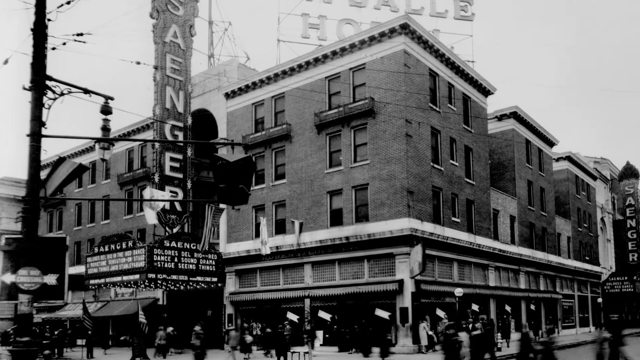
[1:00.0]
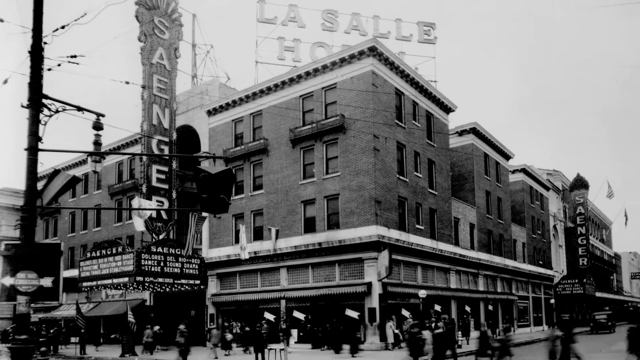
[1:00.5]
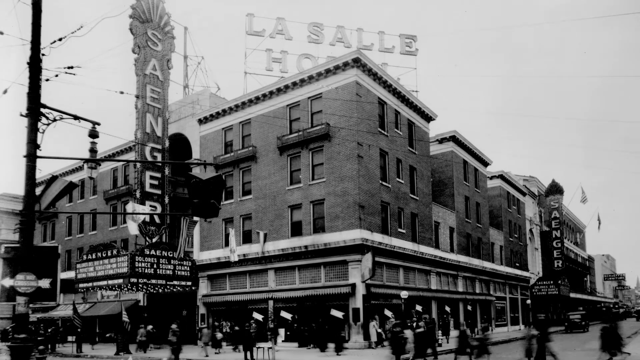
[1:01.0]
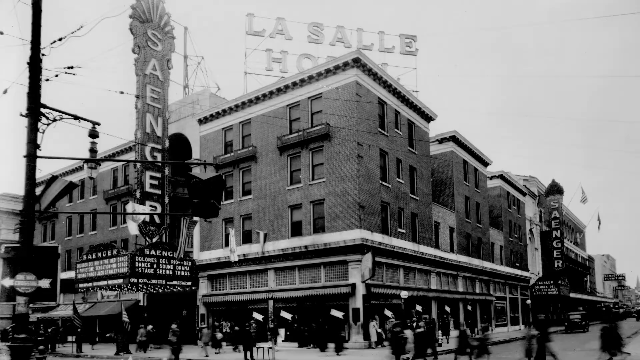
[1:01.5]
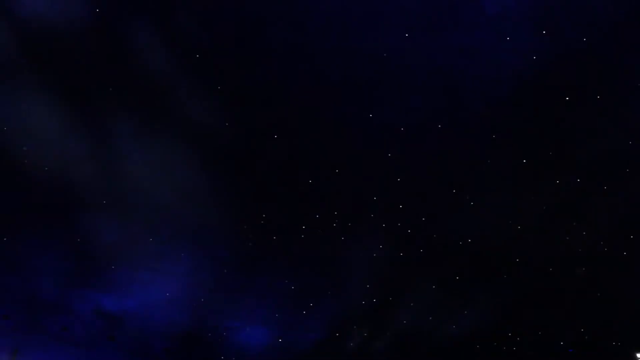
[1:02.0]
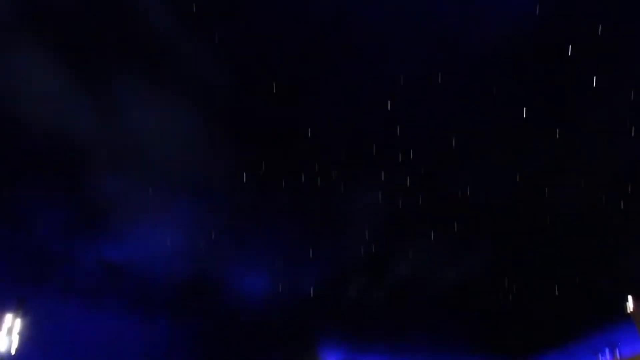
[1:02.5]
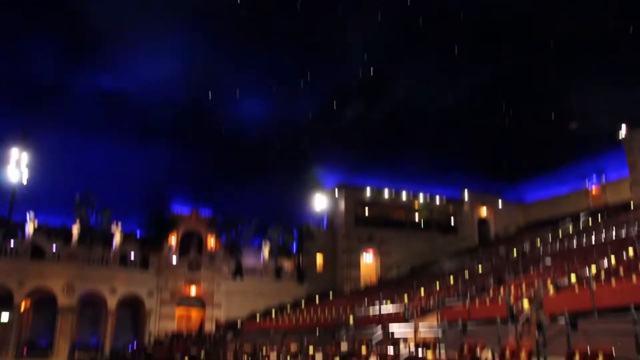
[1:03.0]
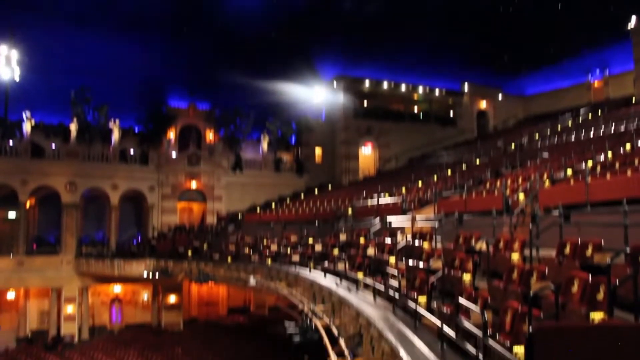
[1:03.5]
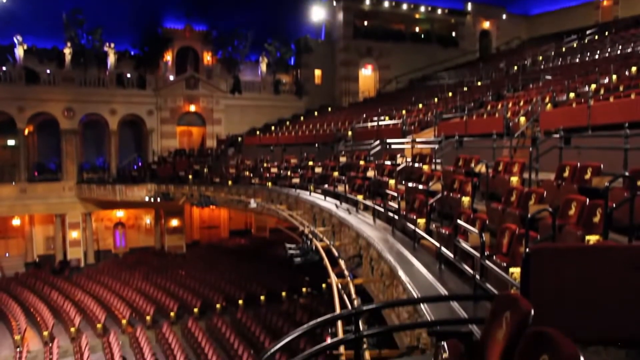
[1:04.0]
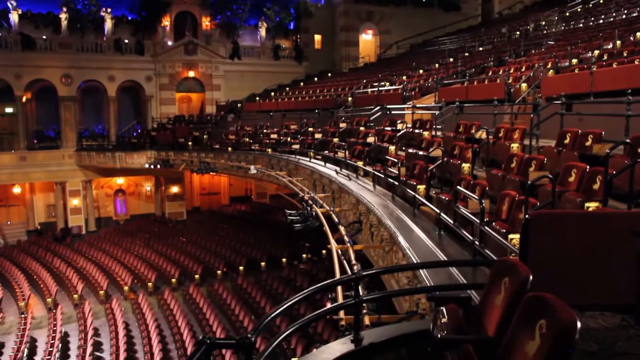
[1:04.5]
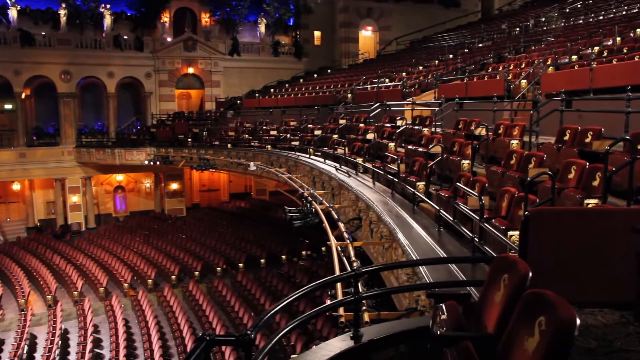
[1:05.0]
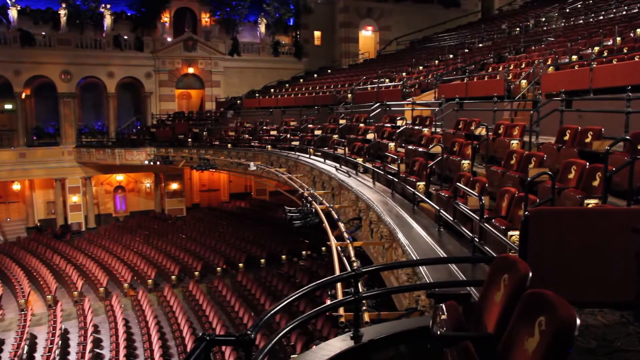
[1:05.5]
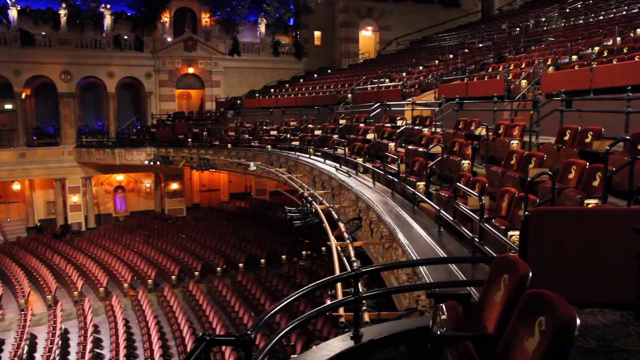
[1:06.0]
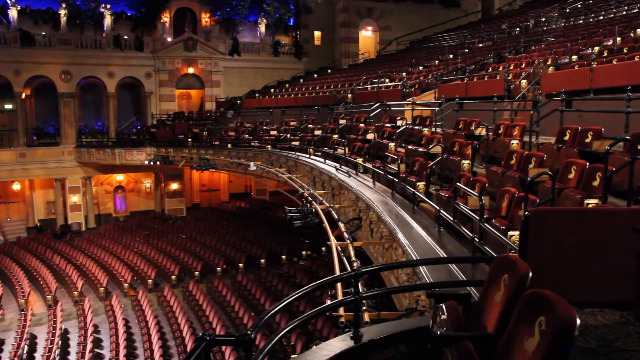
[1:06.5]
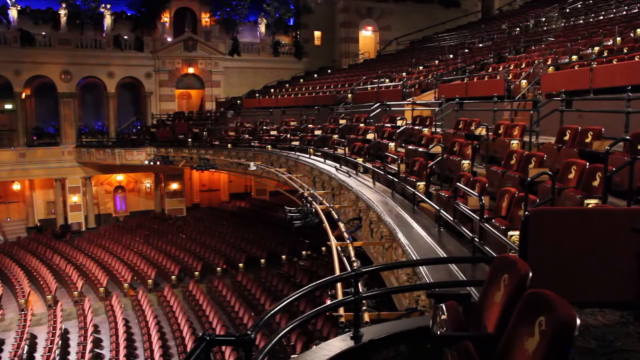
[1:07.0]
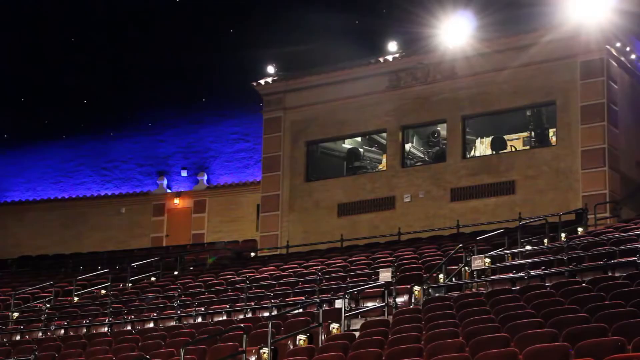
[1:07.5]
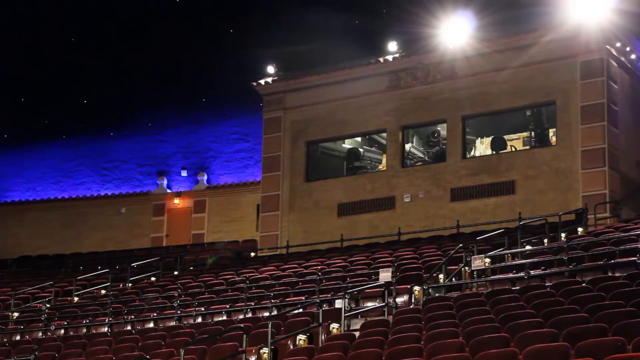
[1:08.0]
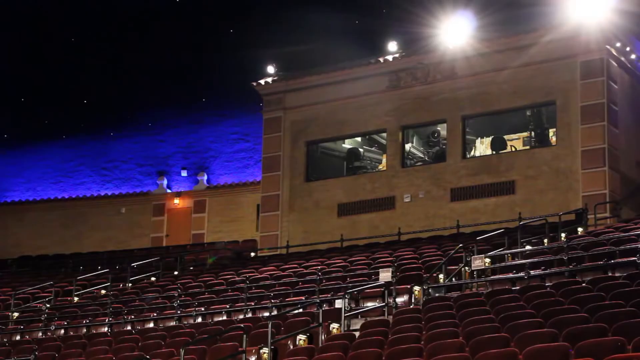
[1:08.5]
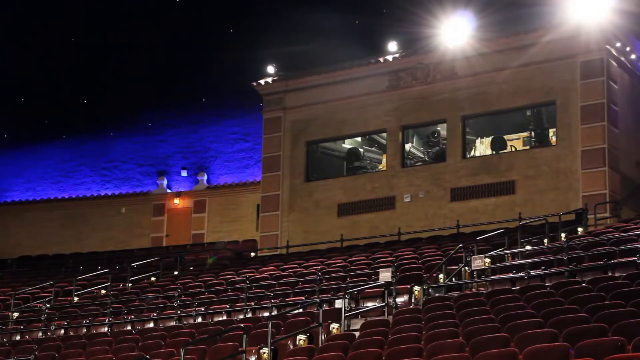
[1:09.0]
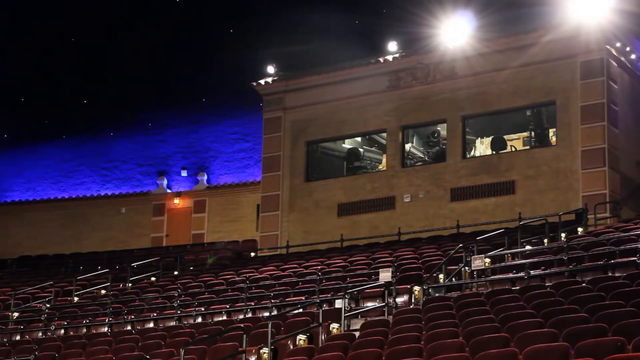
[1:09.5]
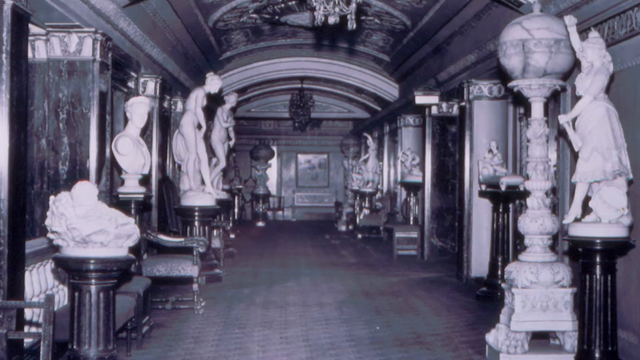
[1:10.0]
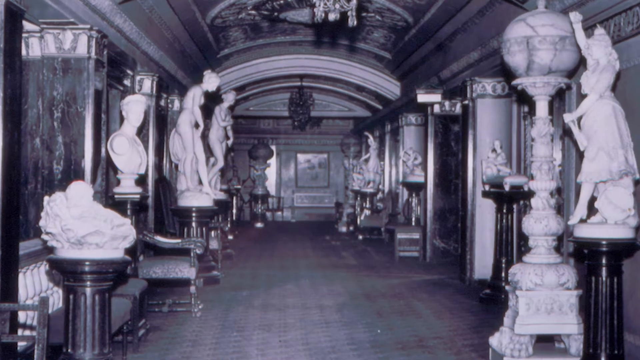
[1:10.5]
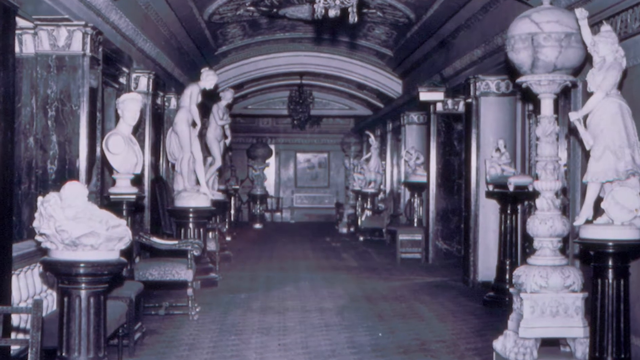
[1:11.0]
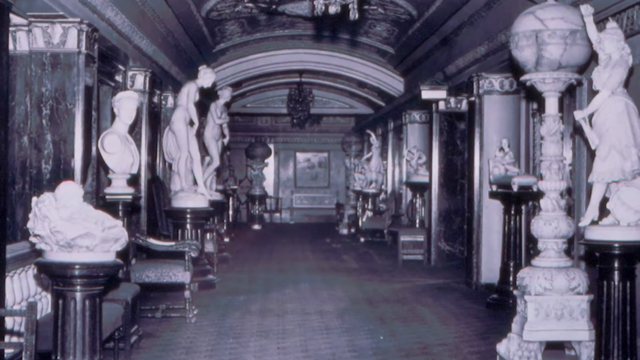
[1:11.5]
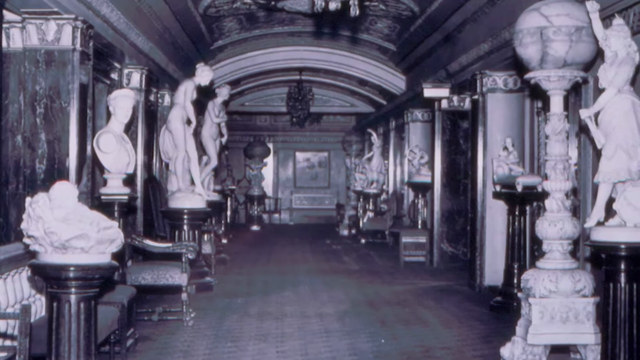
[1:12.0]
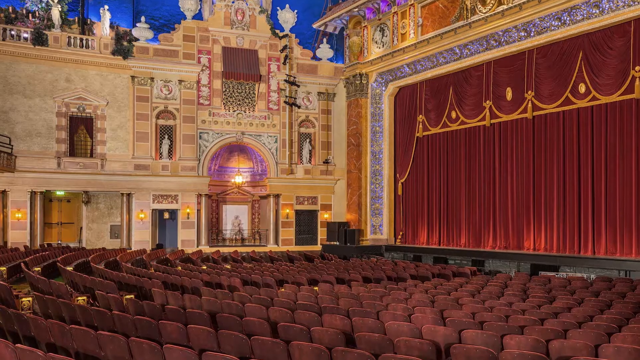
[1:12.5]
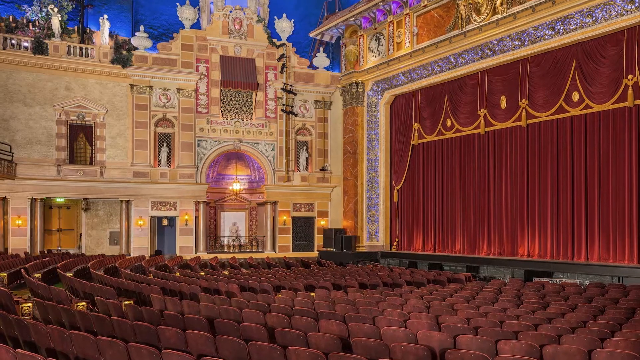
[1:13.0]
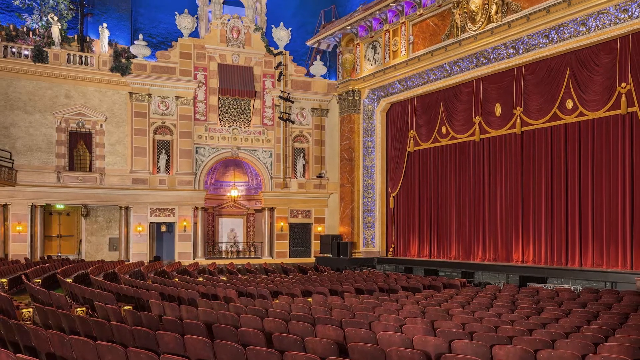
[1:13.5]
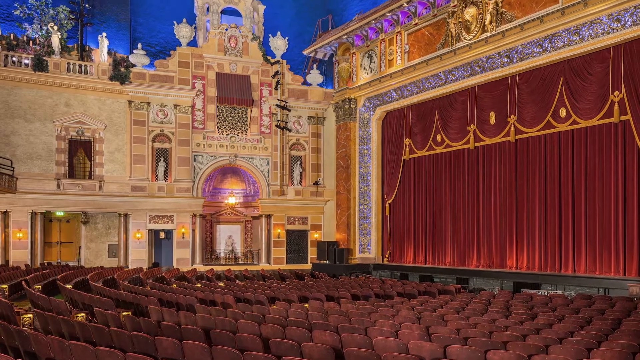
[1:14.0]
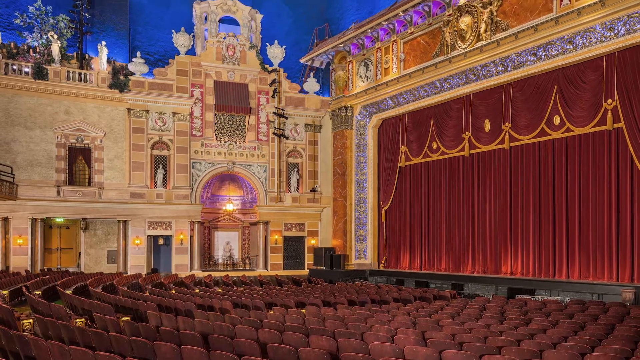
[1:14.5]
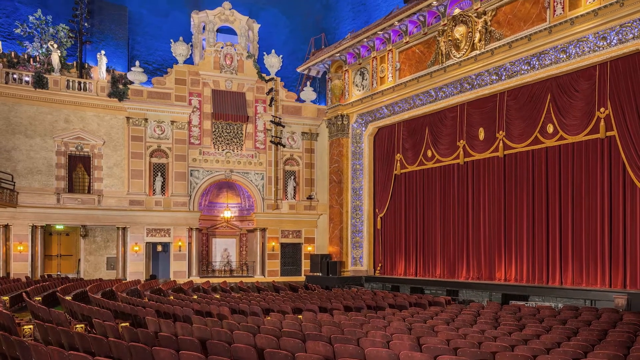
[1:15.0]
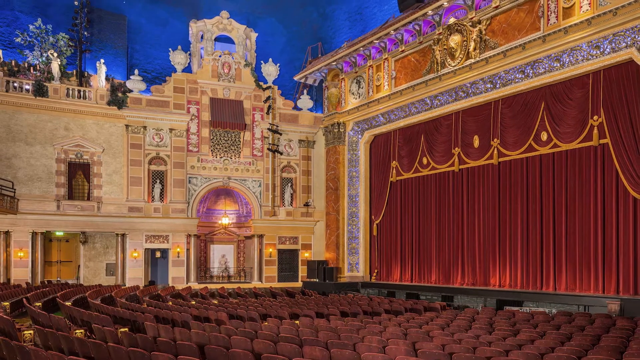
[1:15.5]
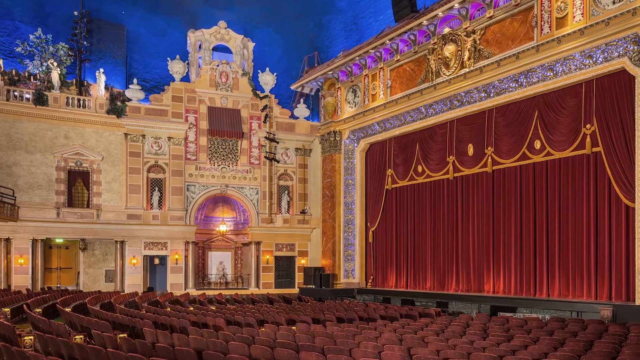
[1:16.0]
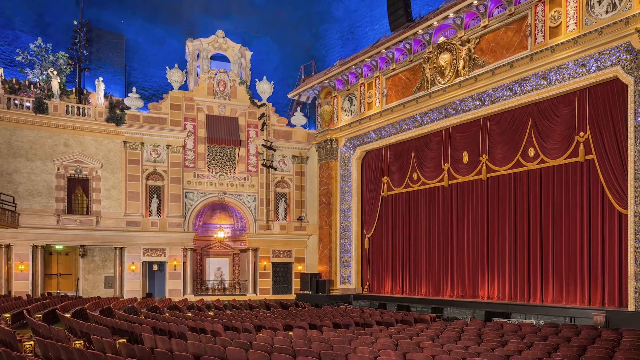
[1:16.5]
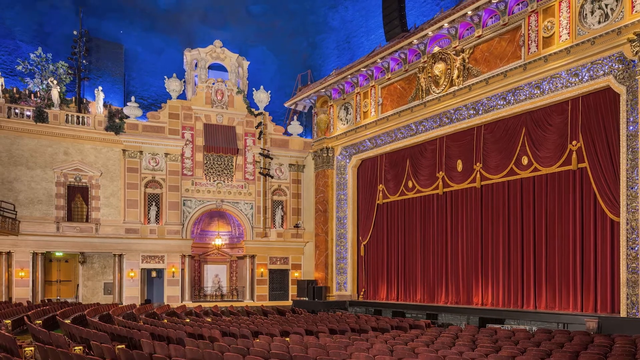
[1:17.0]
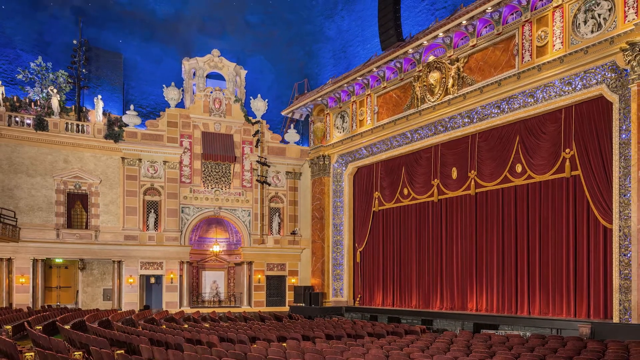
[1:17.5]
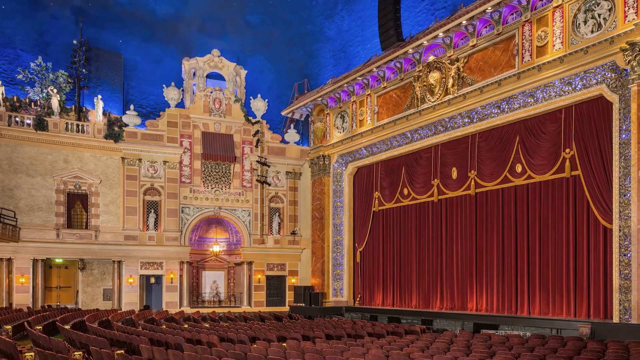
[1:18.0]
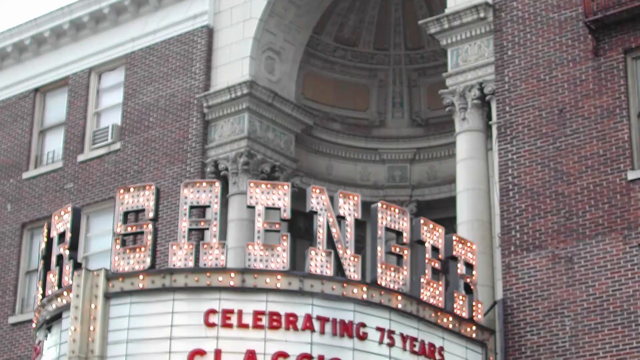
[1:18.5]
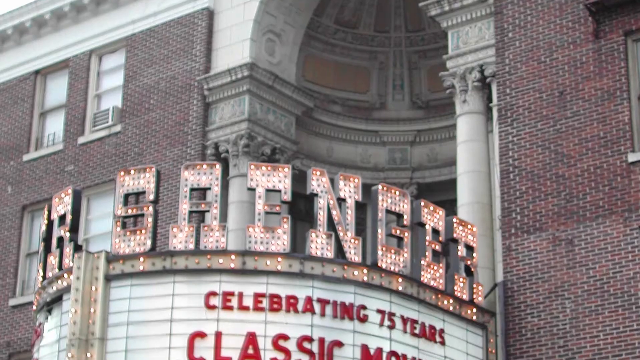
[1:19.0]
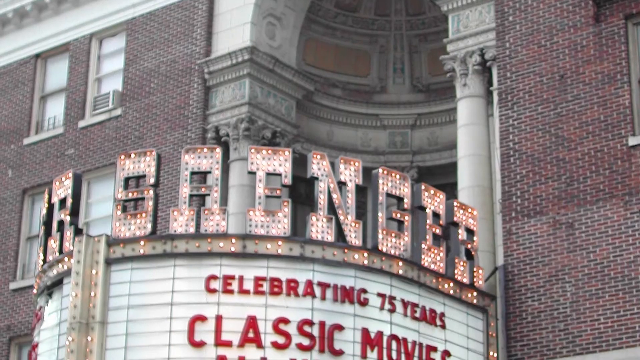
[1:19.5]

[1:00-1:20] The Saenger building has quite a vintage look and appears to be at a hotel, since there is a sign above the building that does not fully show. On the left is what looks like a robot, along with a sign that says "Saenger." Back inside the Saenger Theatre, a clearer view shows red chairs. The top view has blue lights and a dark sky, giving a magical feel, and there is quite a lot of space inside the theatre. A different view of the seats follows, then sculptures of people inside the theatre, mostly women and one man. The women pose differently, and two of them look like they are not dressed.